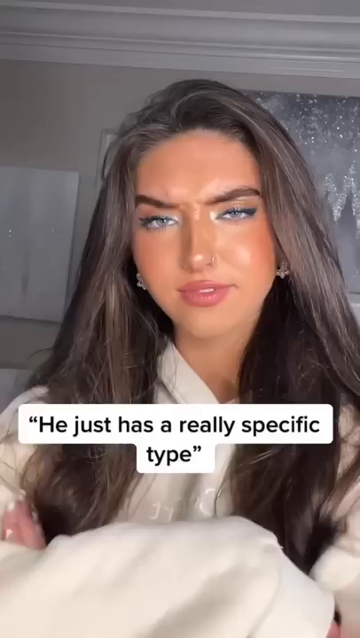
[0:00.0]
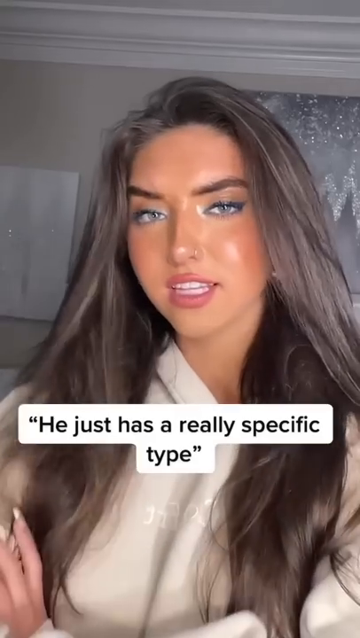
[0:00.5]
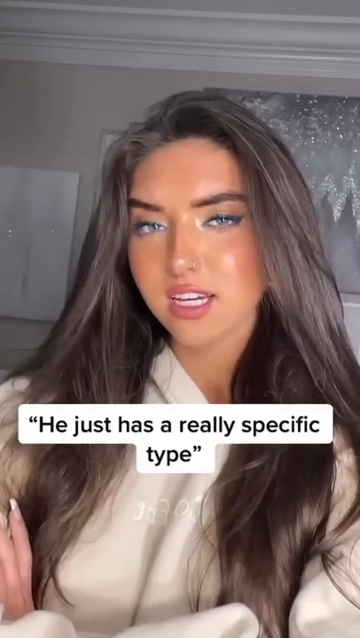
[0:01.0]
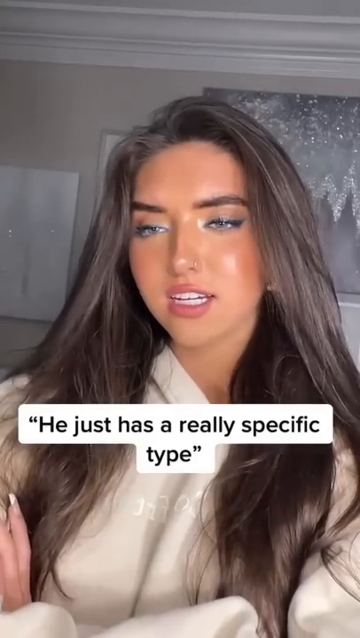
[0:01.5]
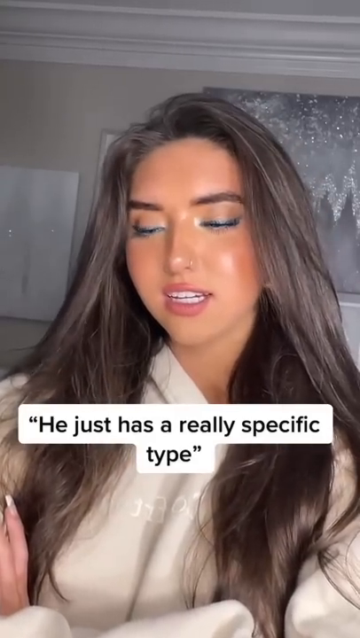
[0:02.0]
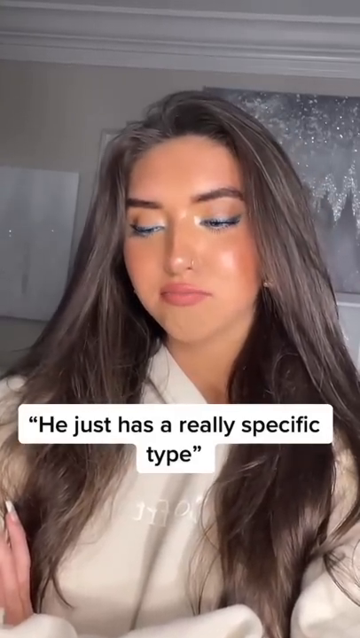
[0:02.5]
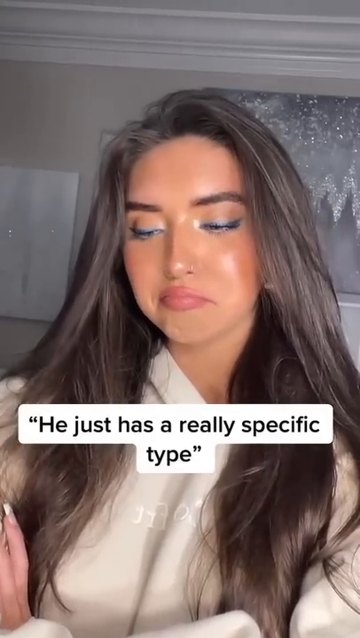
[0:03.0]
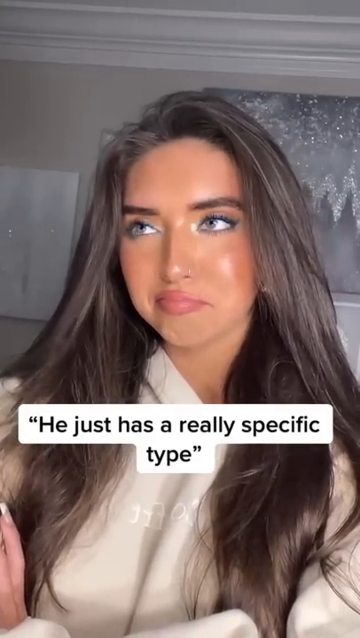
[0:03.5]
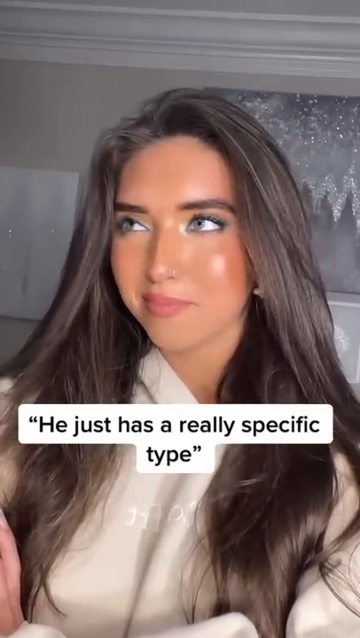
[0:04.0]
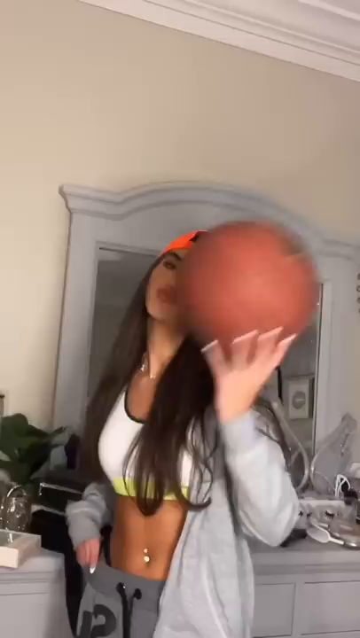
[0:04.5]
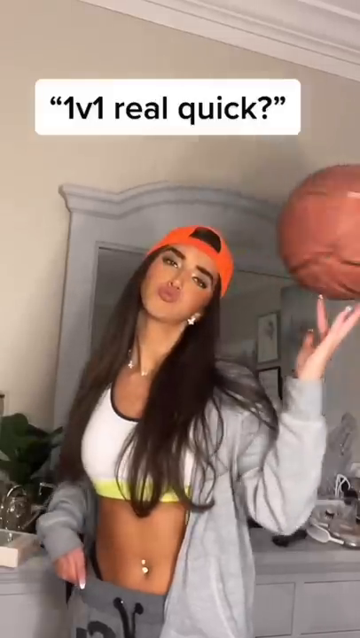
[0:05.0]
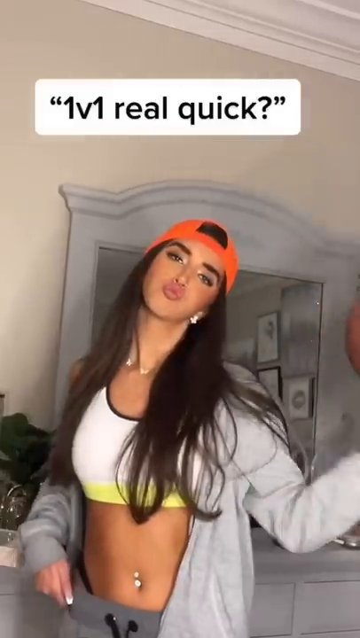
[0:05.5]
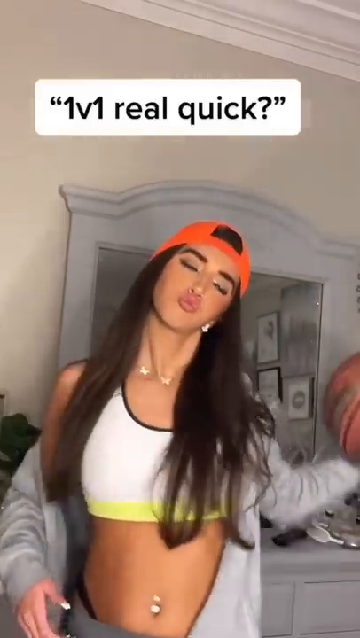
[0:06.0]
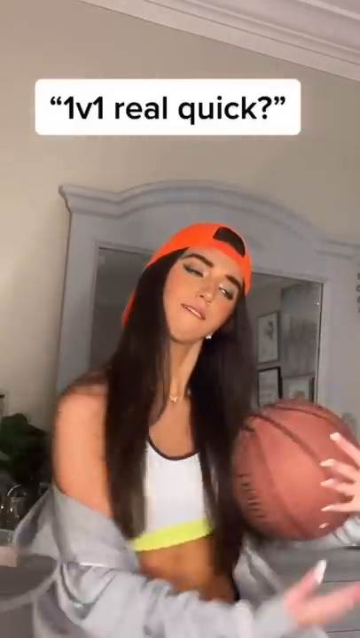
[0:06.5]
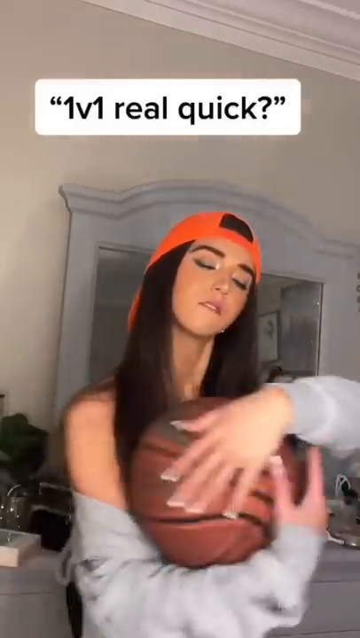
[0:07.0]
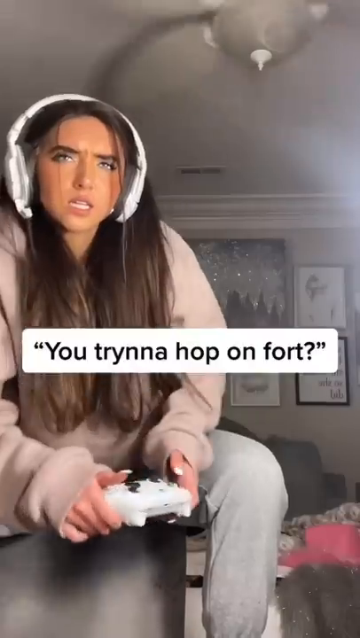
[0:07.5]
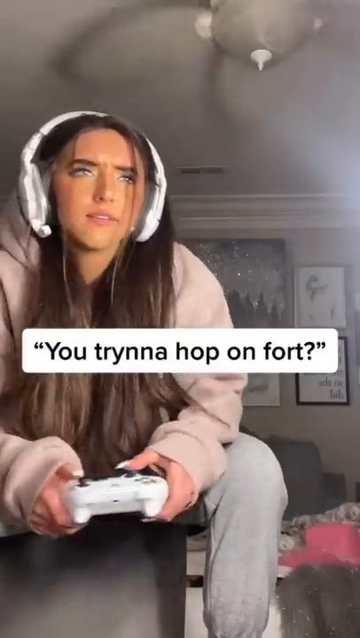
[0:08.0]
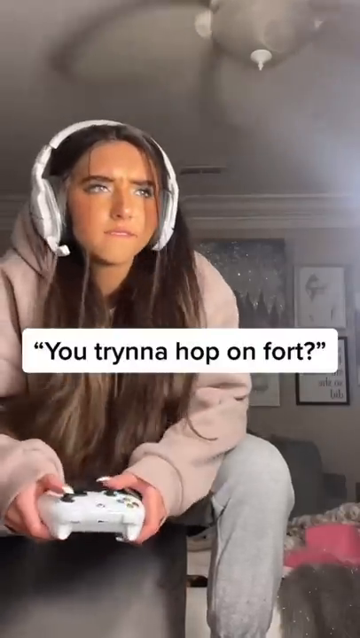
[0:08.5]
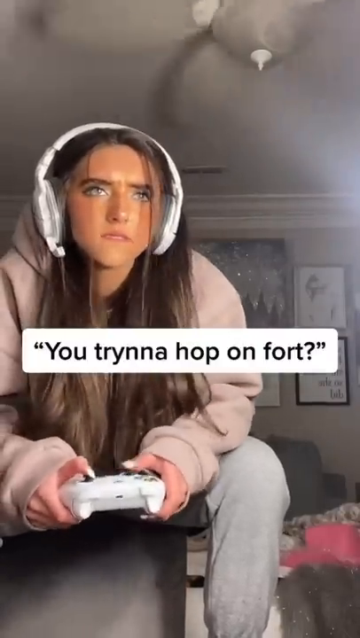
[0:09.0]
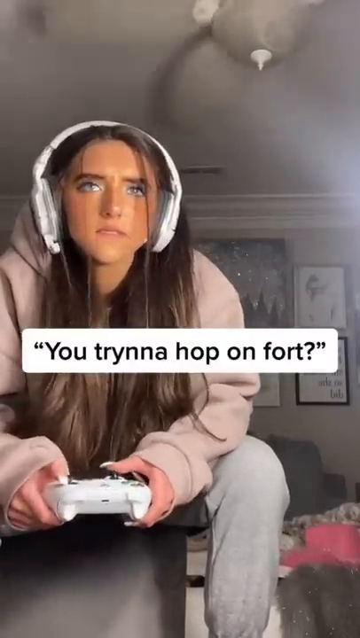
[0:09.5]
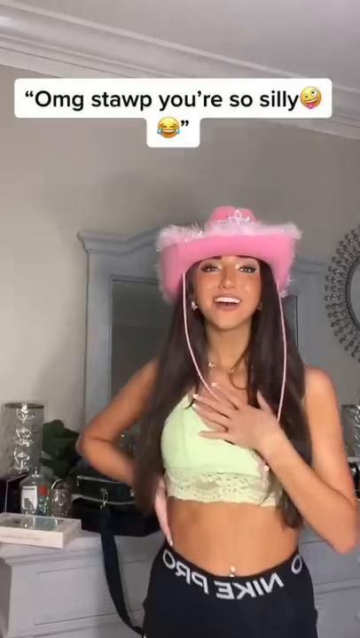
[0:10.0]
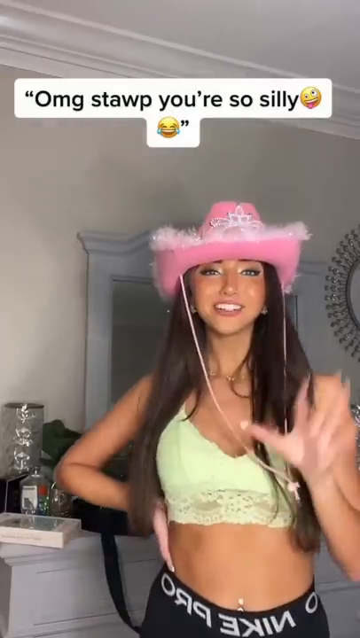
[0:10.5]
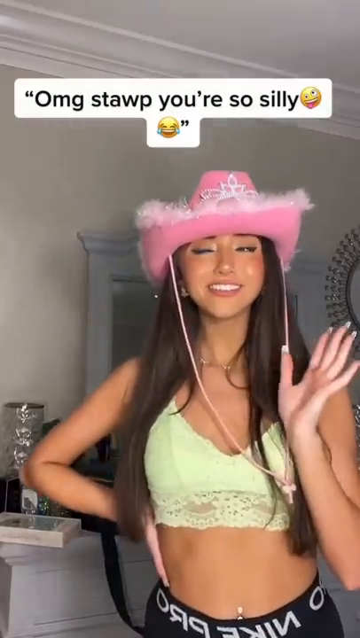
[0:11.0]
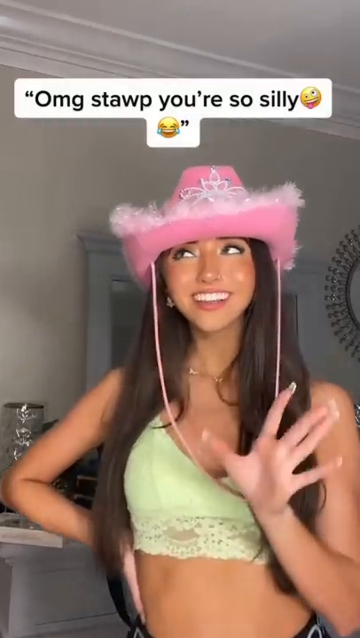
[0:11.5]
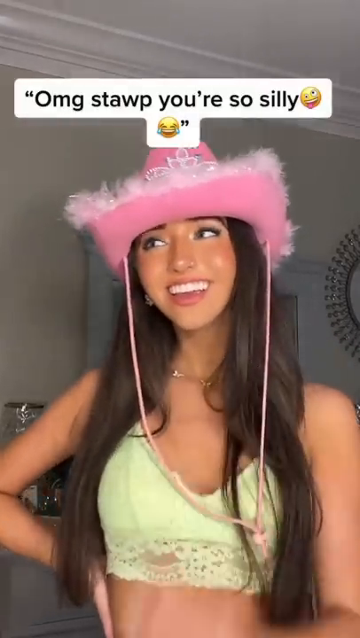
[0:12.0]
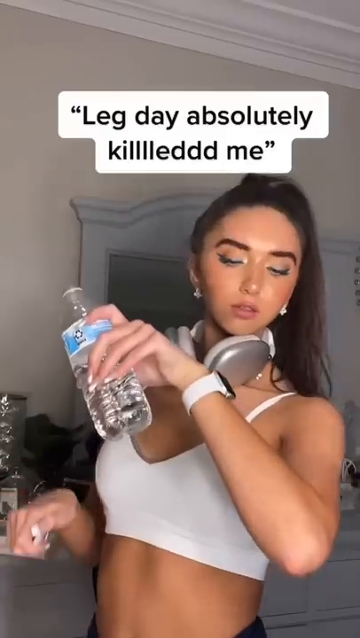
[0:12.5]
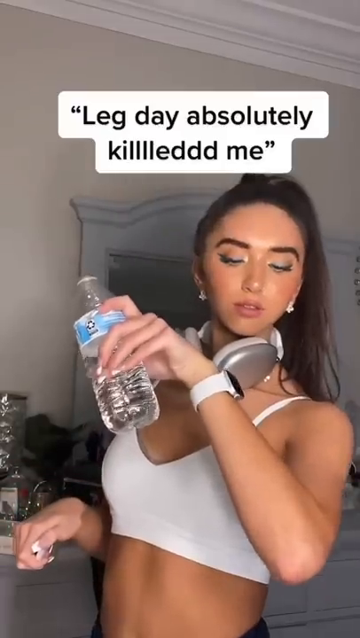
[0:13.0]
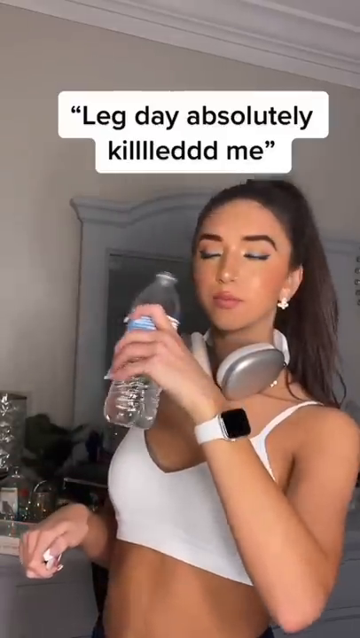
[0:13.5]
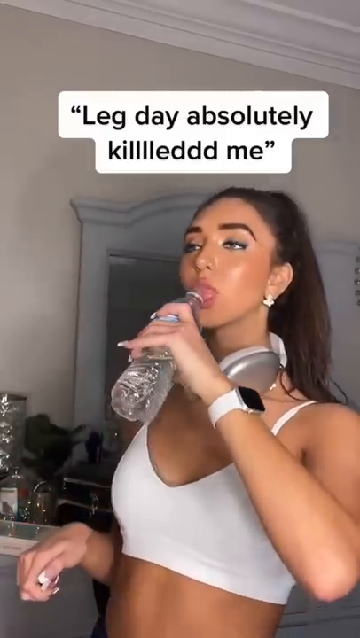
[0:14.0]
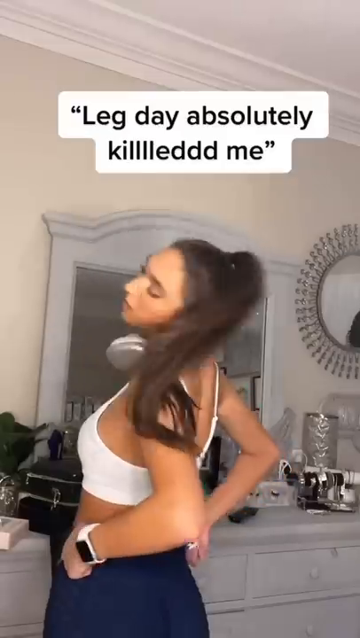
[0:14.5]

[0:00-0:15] This comical video is titled when you change your personality for every boy you talk to. A young girl, probably in her late teens, with dark hair, looks at the camera; she is pretty and wears a fair amount of makeup. Text in quotation marks reads "he just has a really specific type," and the girl makes a kind of "hmm" face and rolls her eyes up a little. She then changes her personality for different guys. Text at the top of the screen says "1v1 real quick" while she wears a backwards hat and holds a basketball in her hand. Next the text says "you trynna to hop on fort?" and she is in gamer gear with headphones on, holding a gaming console. Then the text says "OMG, stawp. You're so silly" and she wears a pink cowgirl hat and a little green bralette. The text then says "leg day absolutely killlled me" while she wears a white workout top and headphones and drinks from a water bottle; it looks like she just worked out.